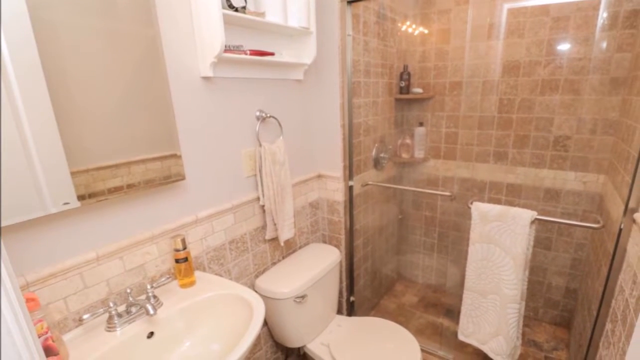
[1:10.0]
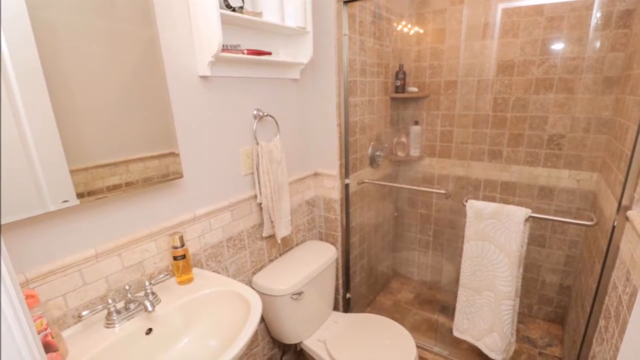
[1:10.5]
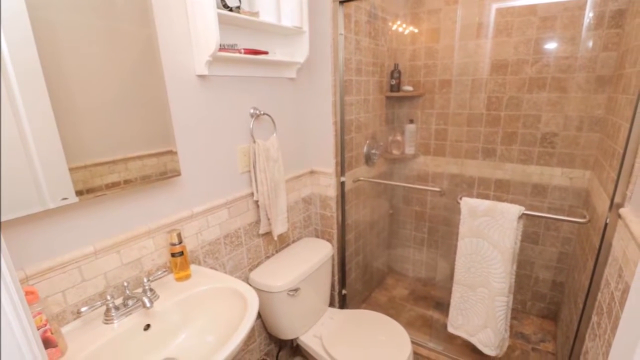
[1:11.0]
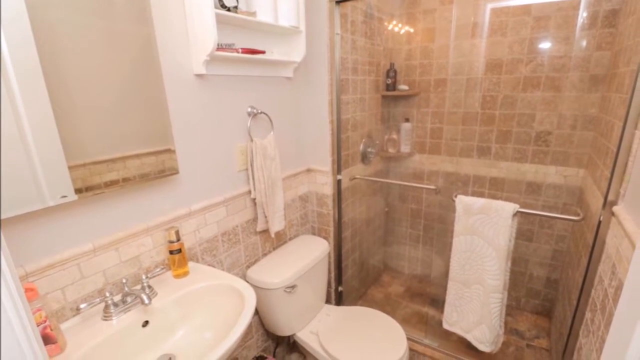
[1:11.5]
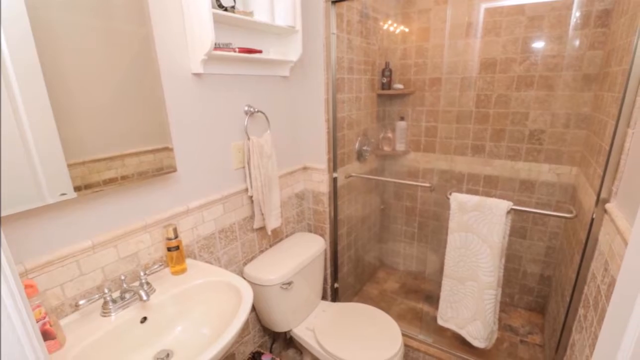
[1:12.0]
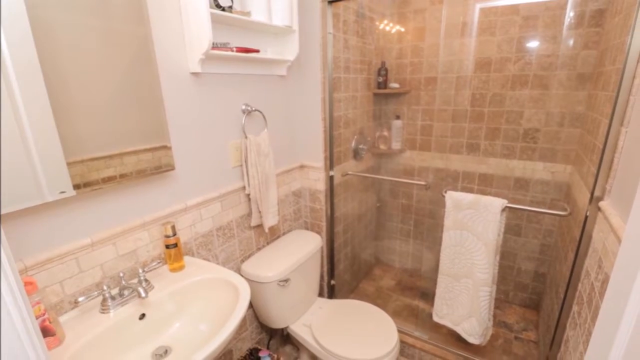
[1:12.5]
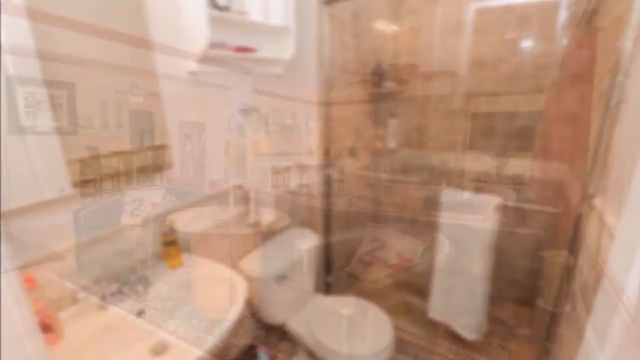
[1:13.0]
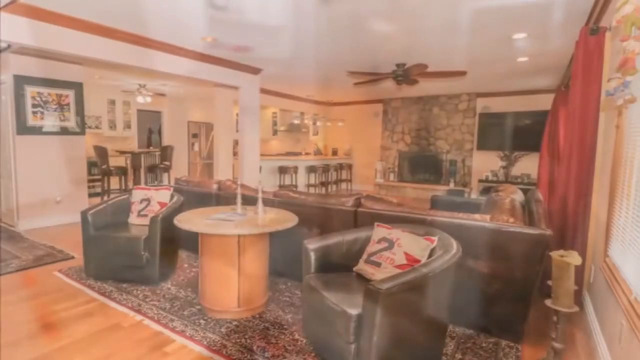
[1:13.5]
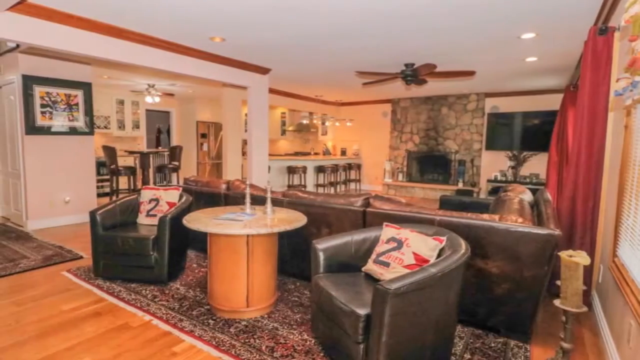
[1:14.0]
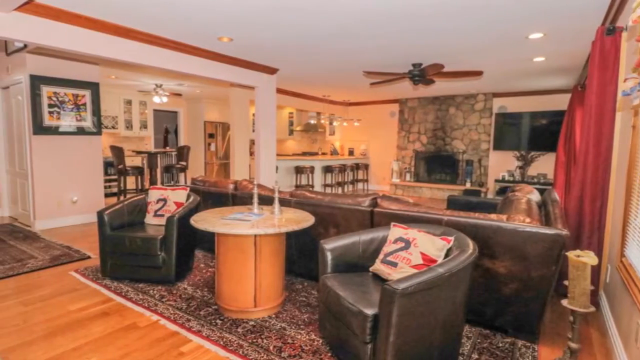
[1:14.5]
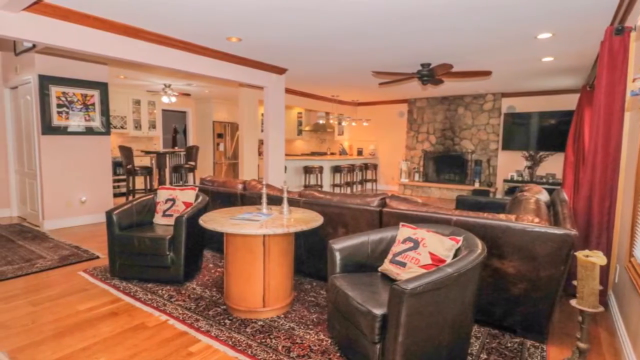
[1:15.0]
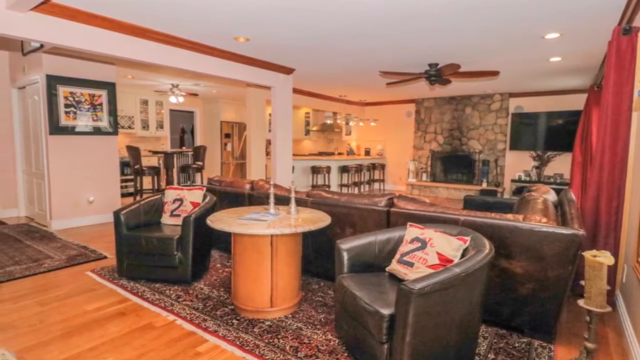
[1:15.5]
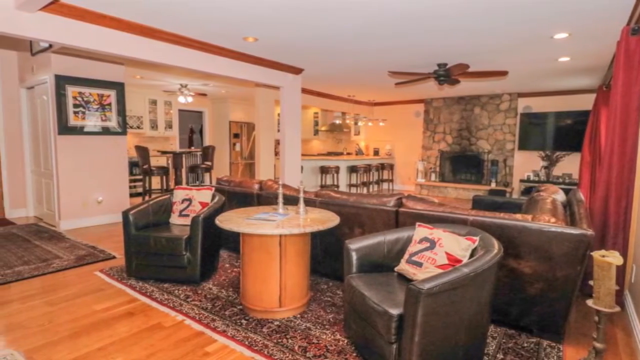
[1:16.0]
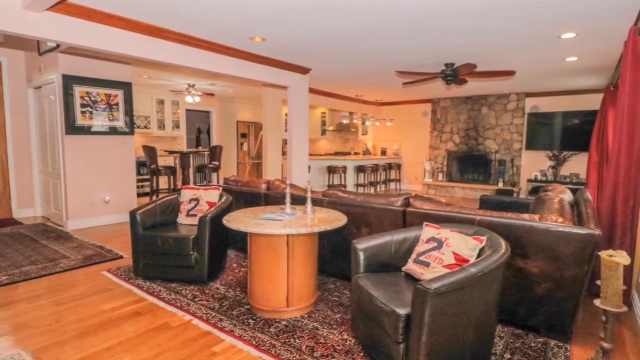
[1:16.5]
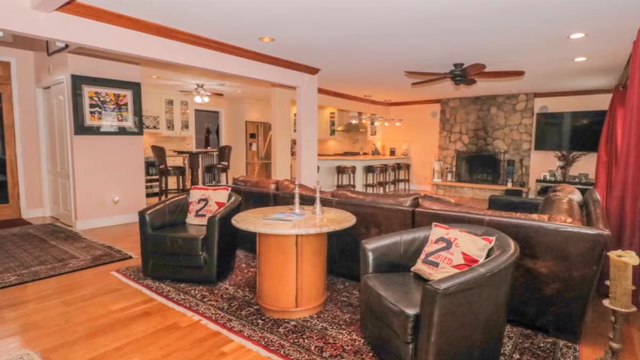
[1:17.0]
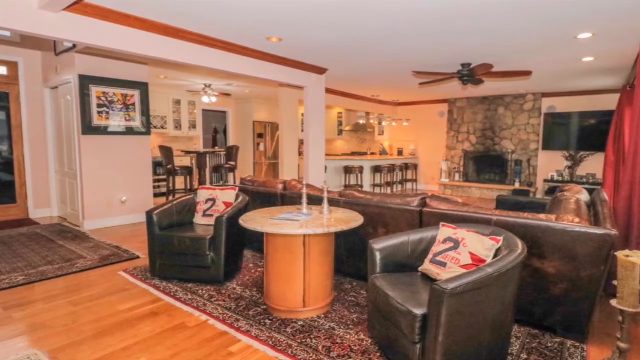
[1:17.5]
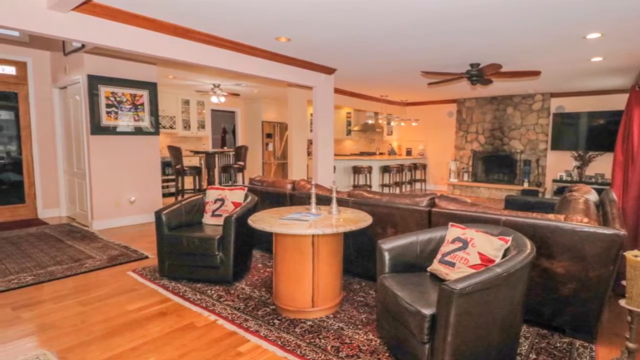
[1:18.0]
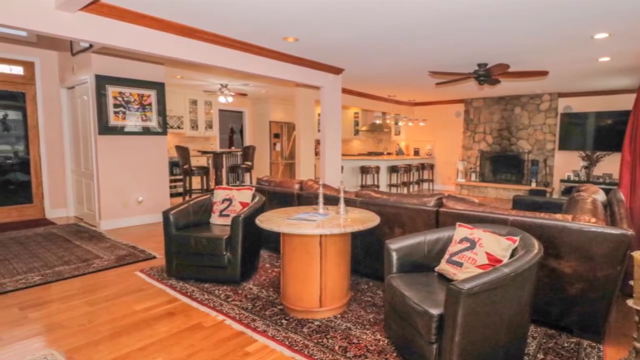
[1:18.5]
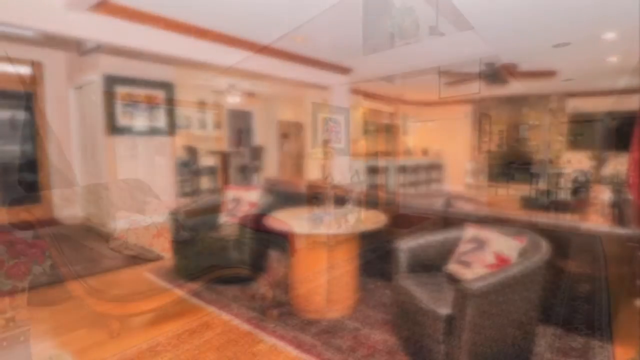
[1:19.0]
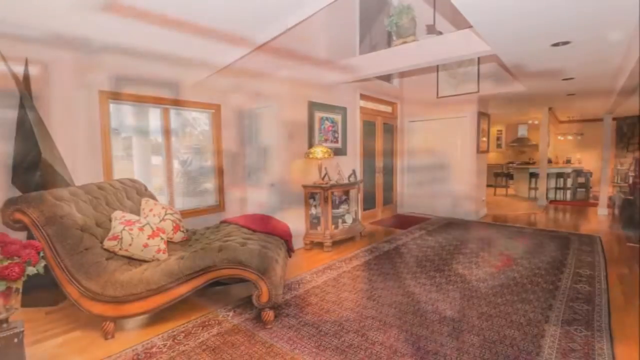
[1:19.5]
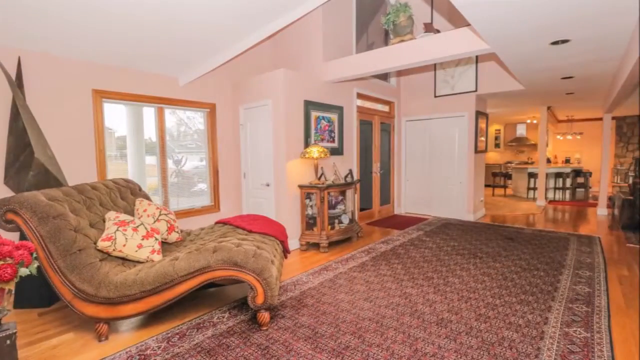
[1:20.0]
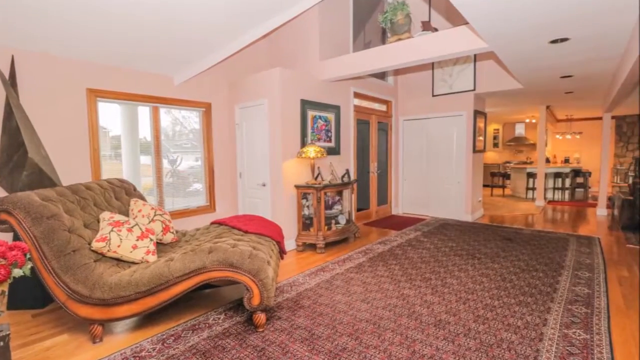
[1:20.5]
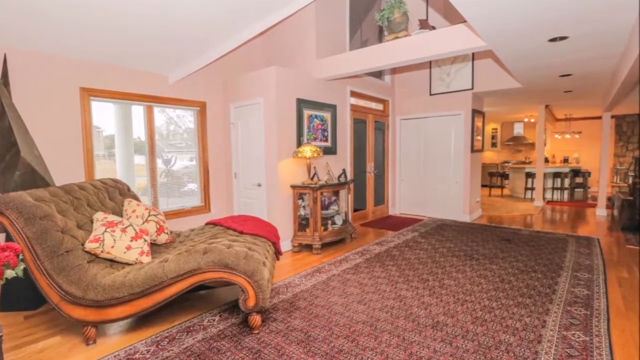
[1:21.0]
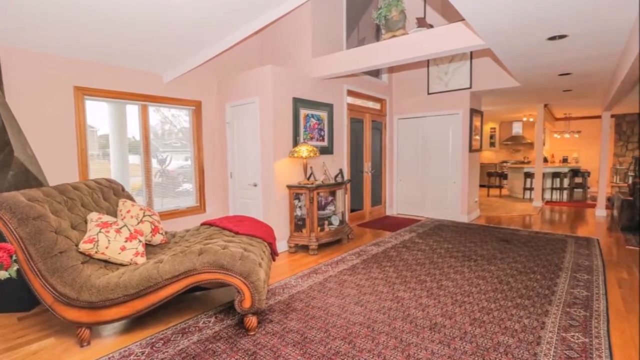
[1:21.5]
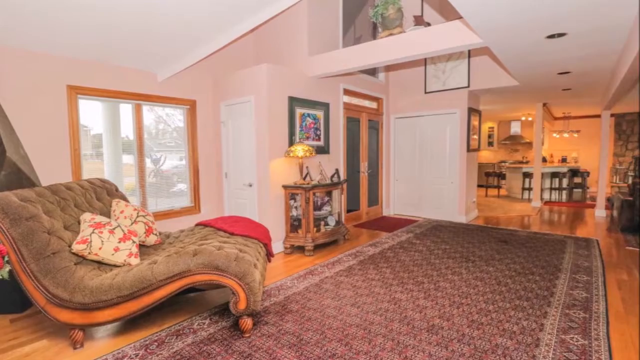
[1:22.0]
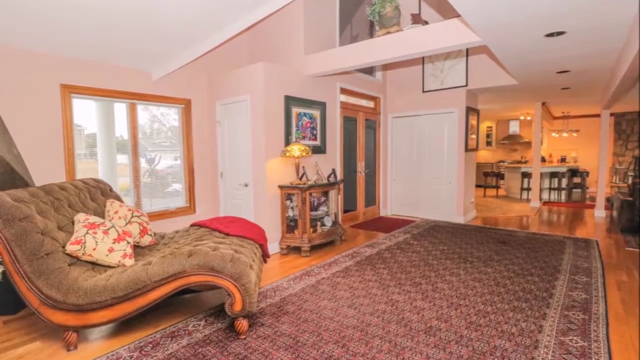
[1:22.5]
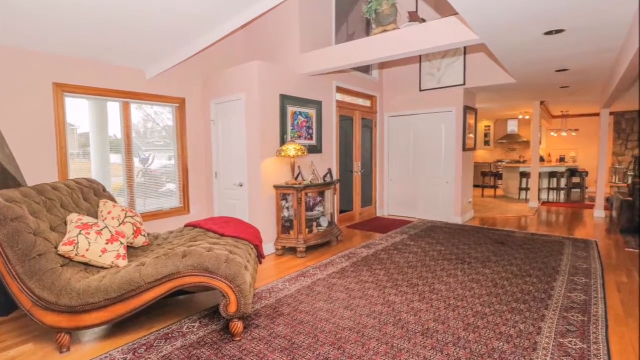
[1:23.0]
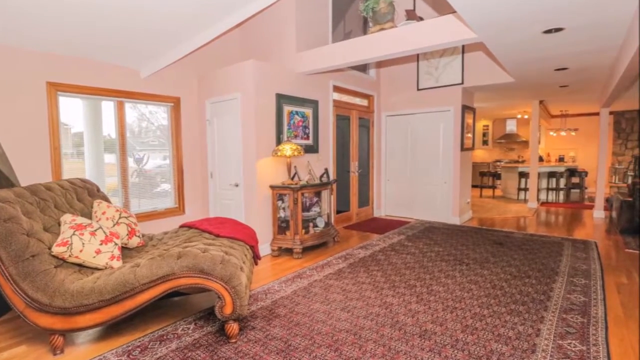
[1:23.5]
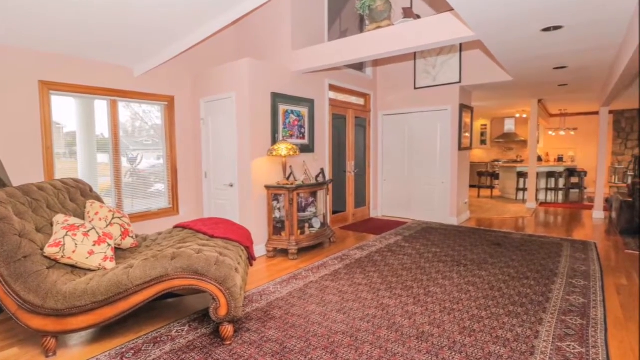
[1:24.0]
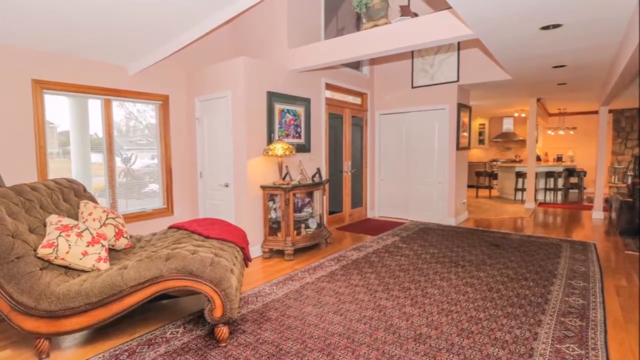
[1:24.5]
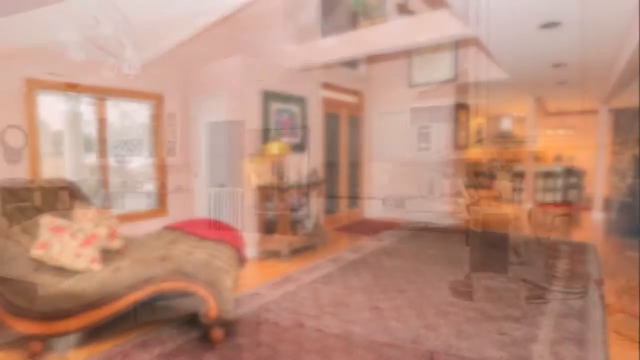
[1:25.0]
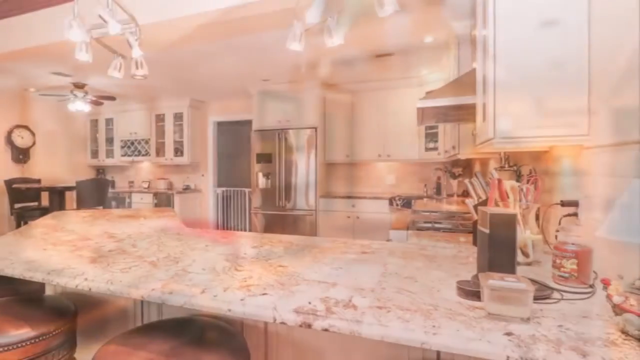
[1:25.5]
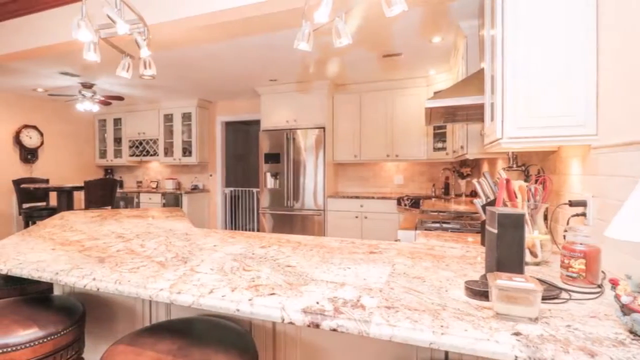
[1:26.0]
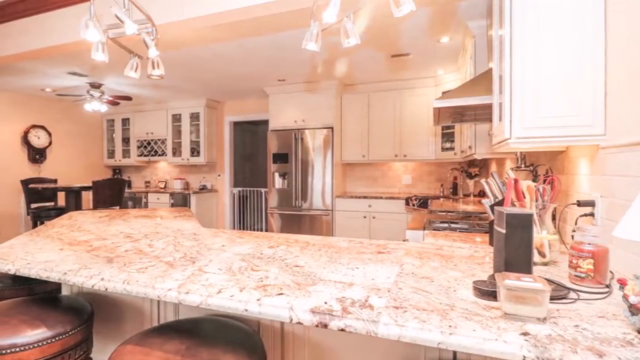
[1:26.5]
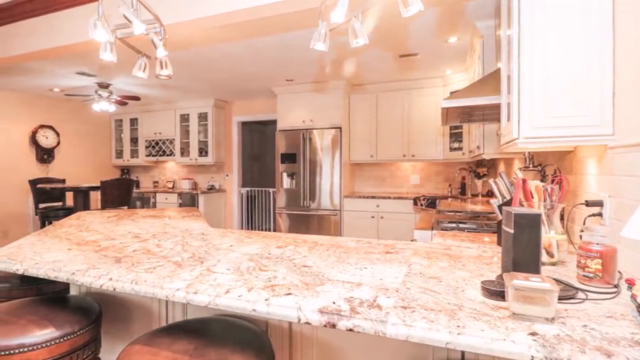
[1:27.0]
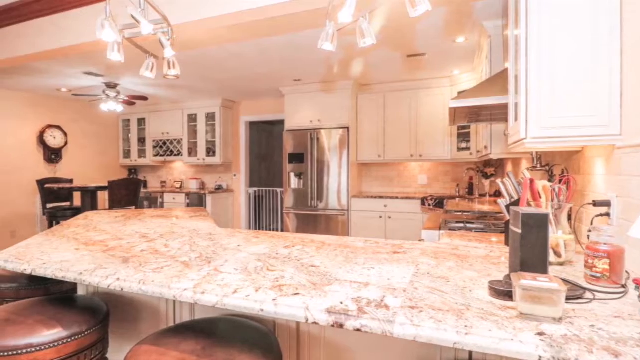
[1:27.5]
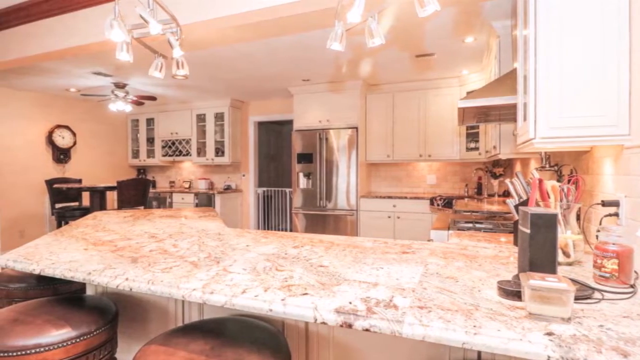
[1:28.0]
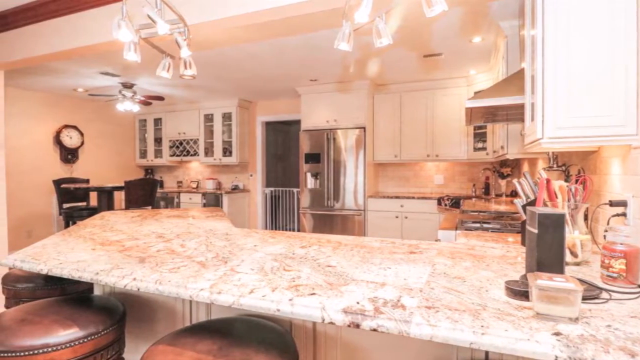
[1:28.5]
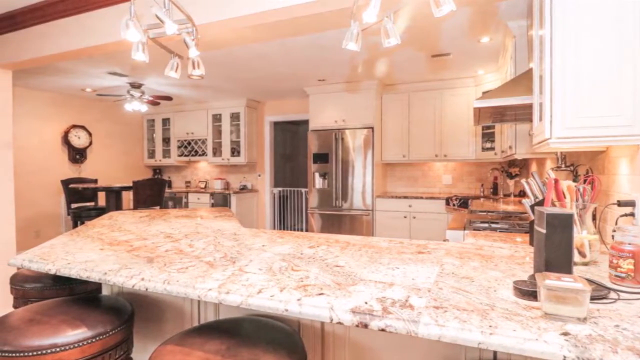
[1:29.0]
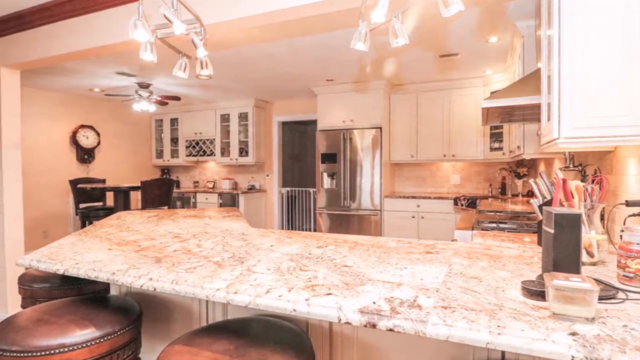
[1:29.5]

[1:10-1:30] The sitting room has a very large sofa, apparently a corner sofa, facing the TV and a fireplace surrounded by stone. Shiny, satin-like red curtains hang at the window. Behind the sofa, two armchairs and a round table form a separate sitting area, and there are some large rugs on the wooden floor. Another area, possibly the entranceway, has another chair on a large rug. In the distance, near the kitchen, there are some ornate pillars. The kitchen is quite large and has a breakfast bar; on the other side of the kitchen there is a dining table and another door, apparently leading somewhere else, with a baby gate on it. The stools at the kitchen bar are made of brownish leather with a stud design running around the edge.